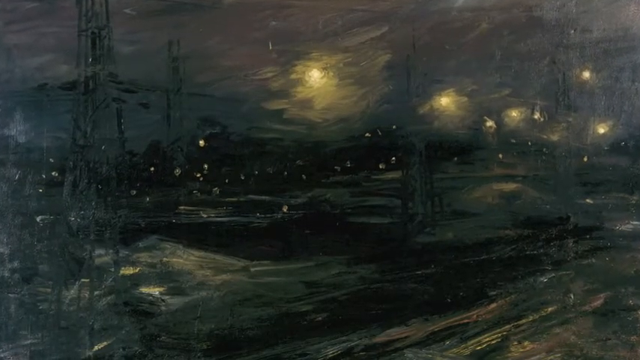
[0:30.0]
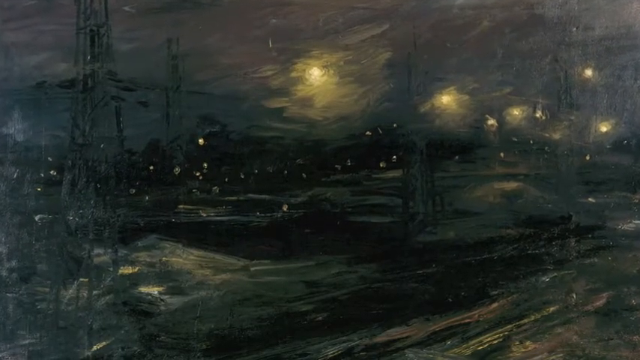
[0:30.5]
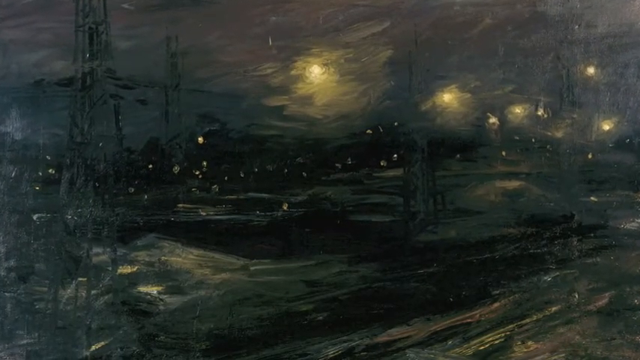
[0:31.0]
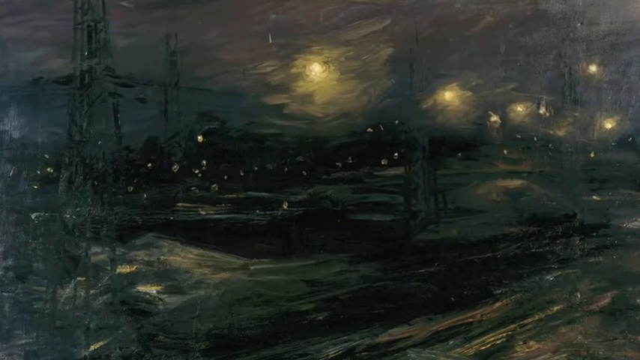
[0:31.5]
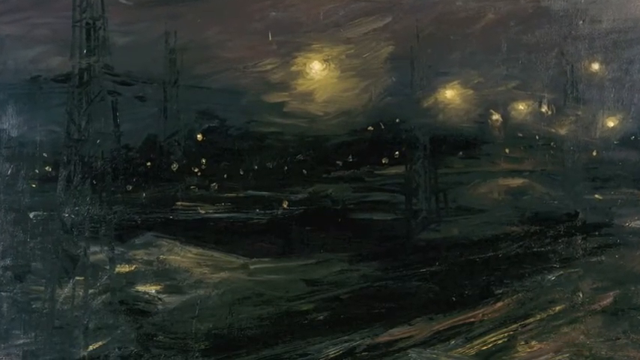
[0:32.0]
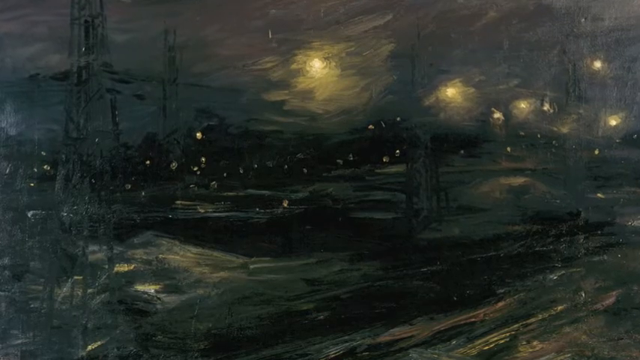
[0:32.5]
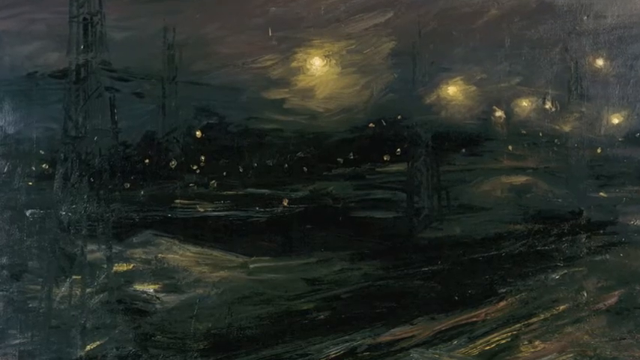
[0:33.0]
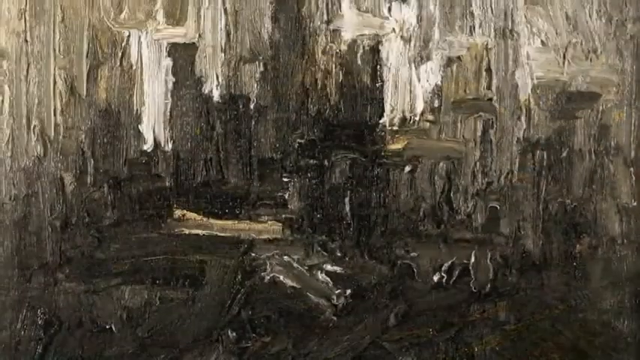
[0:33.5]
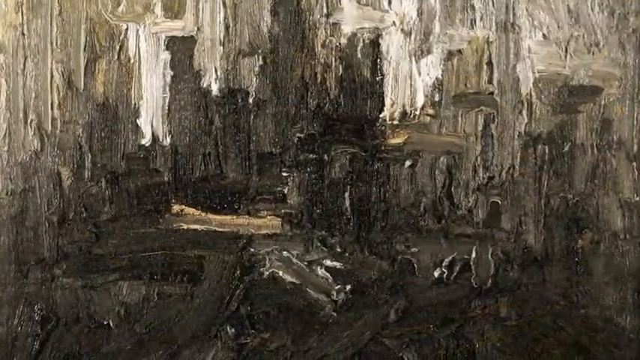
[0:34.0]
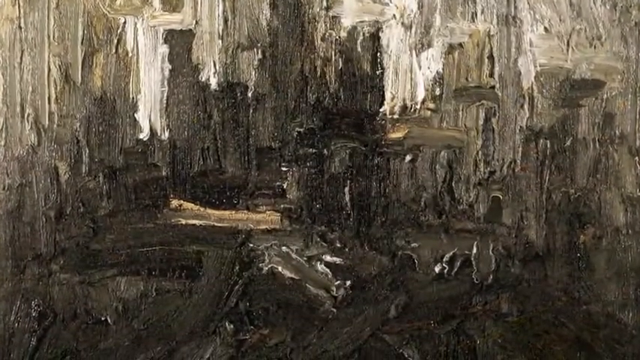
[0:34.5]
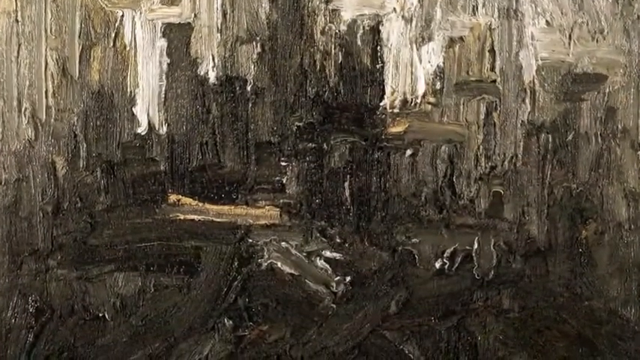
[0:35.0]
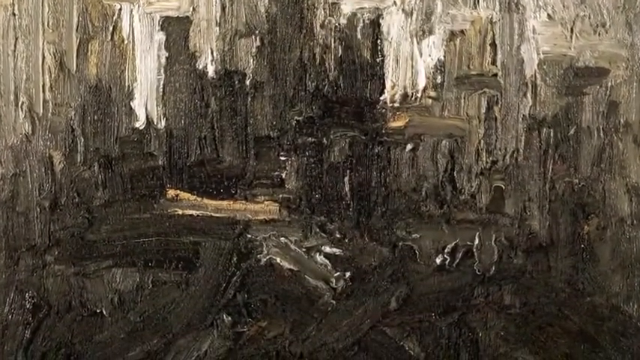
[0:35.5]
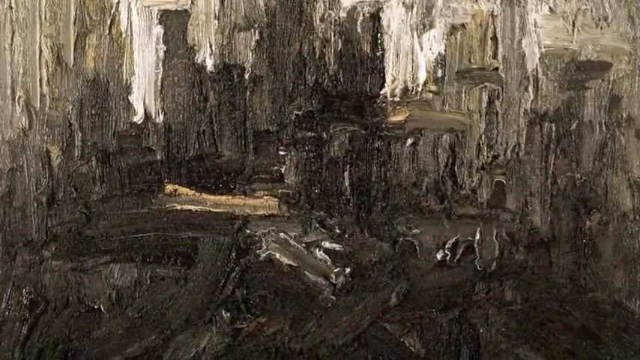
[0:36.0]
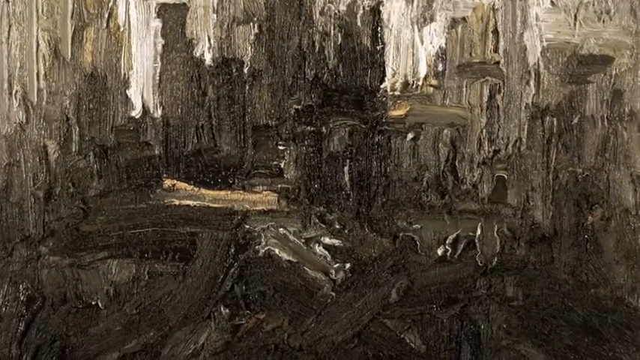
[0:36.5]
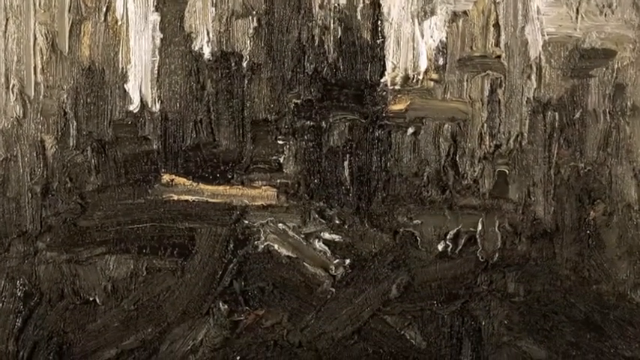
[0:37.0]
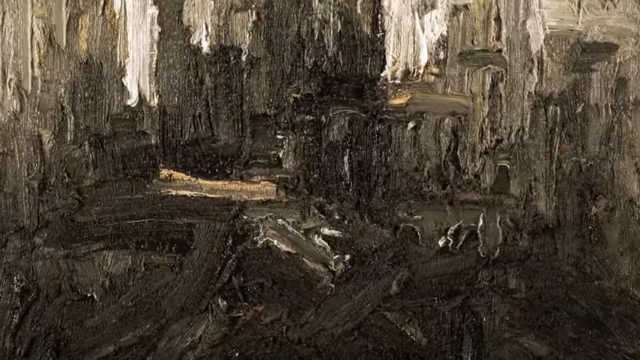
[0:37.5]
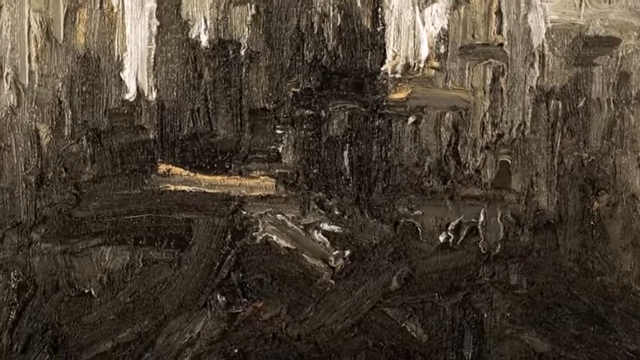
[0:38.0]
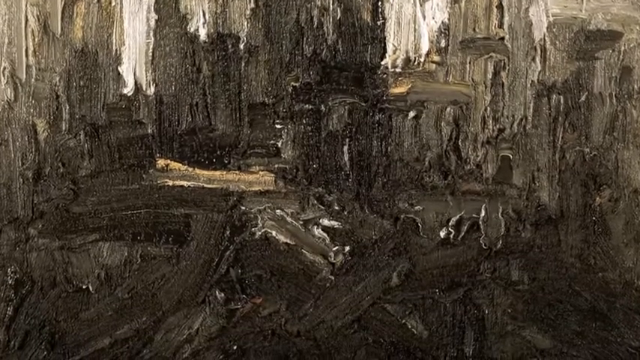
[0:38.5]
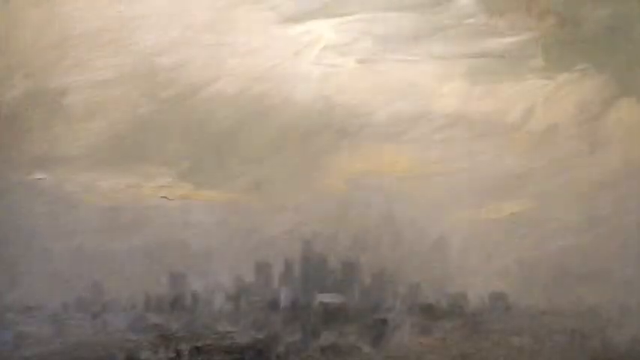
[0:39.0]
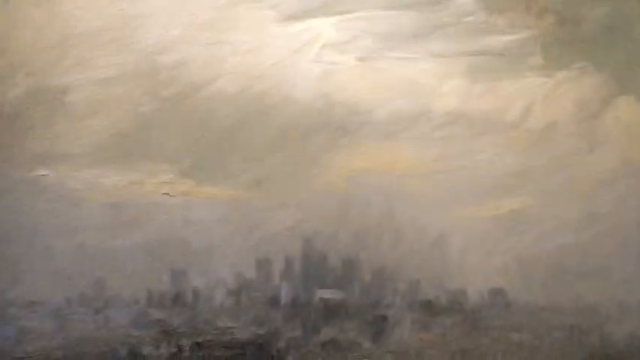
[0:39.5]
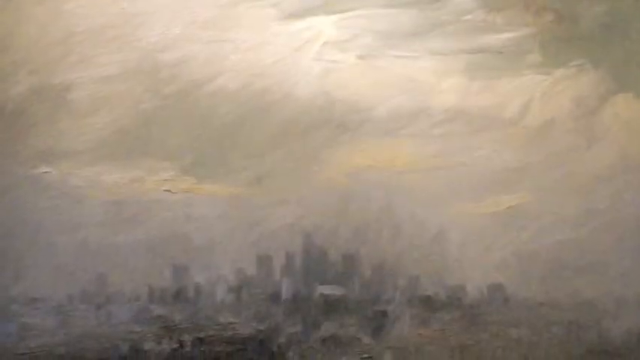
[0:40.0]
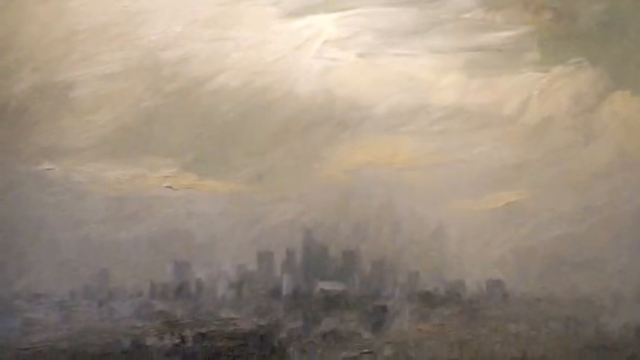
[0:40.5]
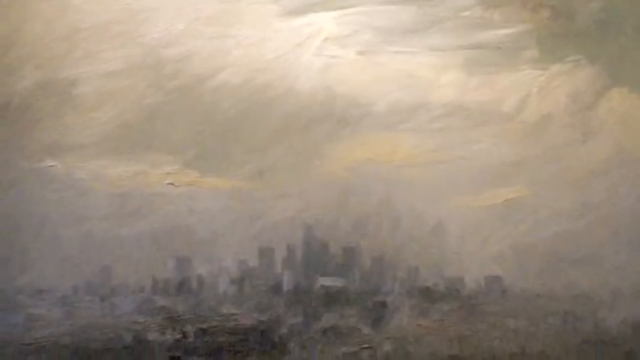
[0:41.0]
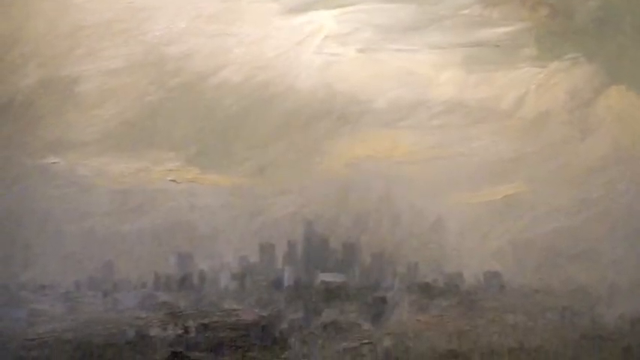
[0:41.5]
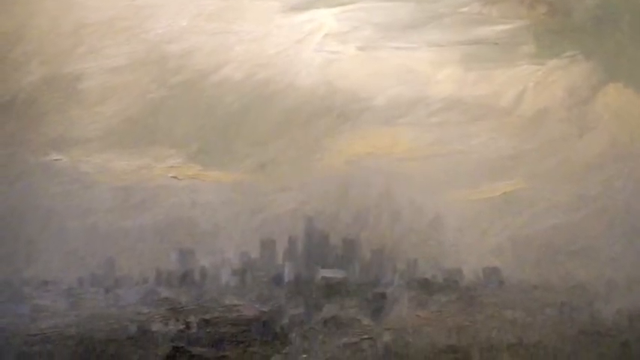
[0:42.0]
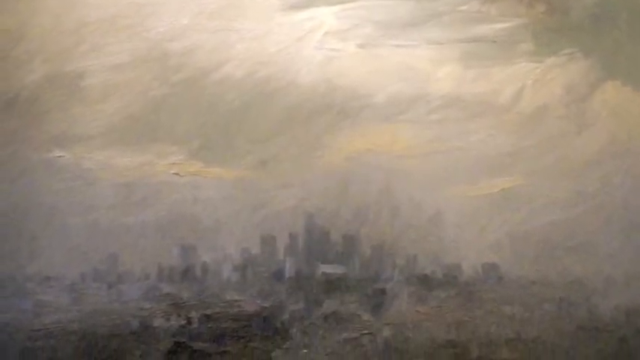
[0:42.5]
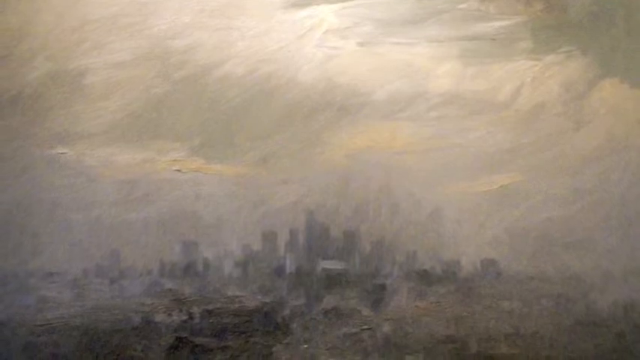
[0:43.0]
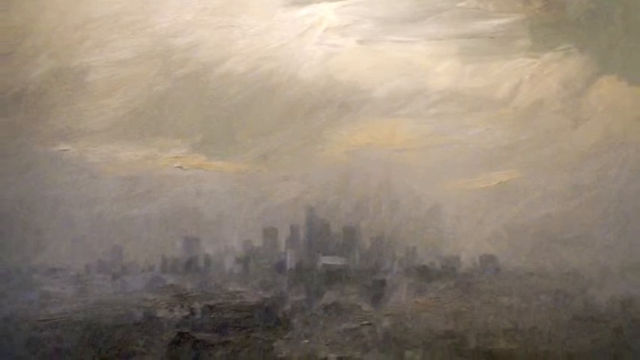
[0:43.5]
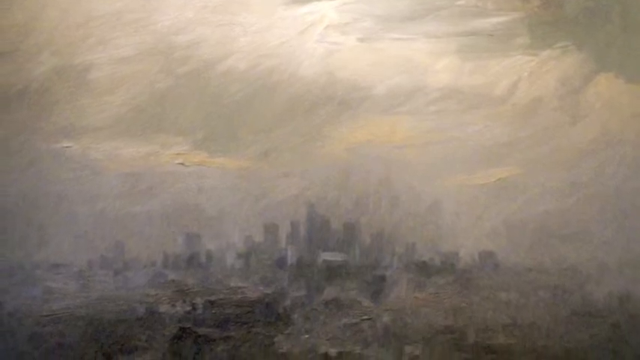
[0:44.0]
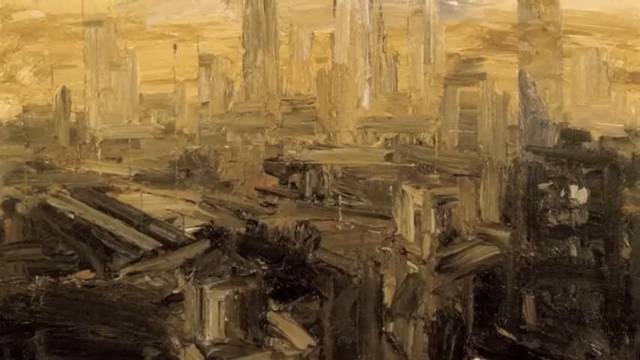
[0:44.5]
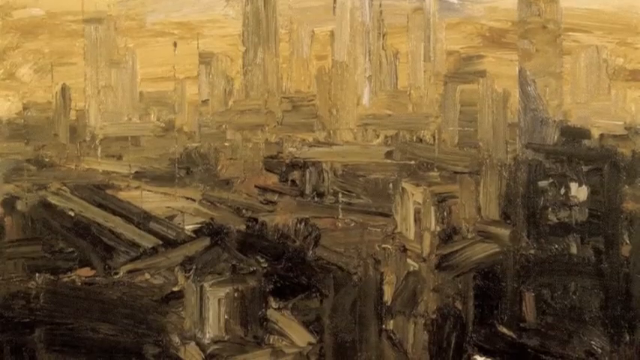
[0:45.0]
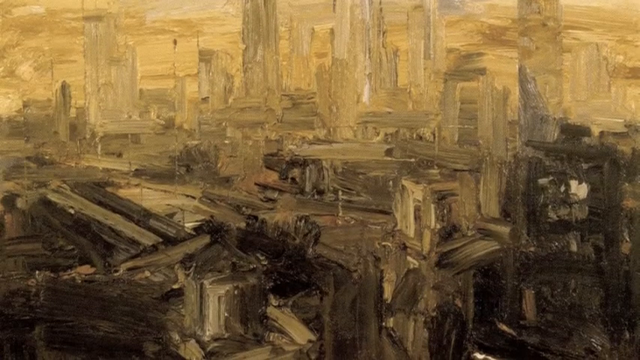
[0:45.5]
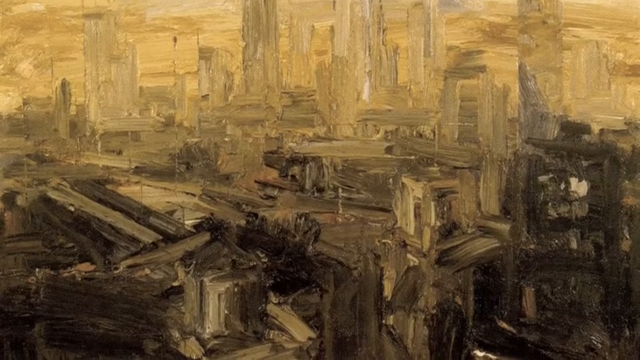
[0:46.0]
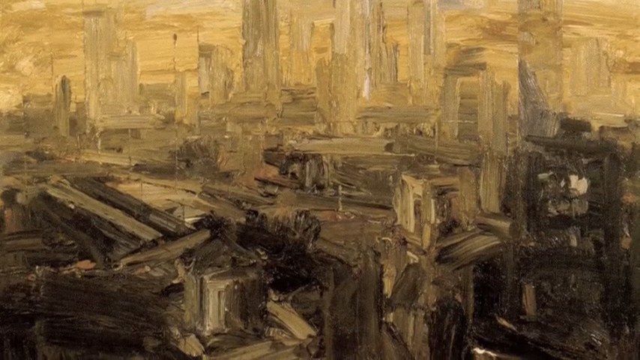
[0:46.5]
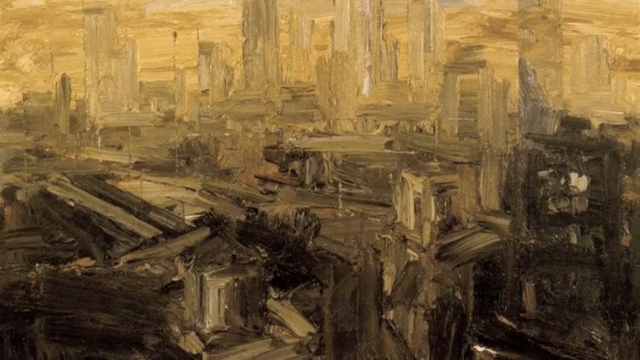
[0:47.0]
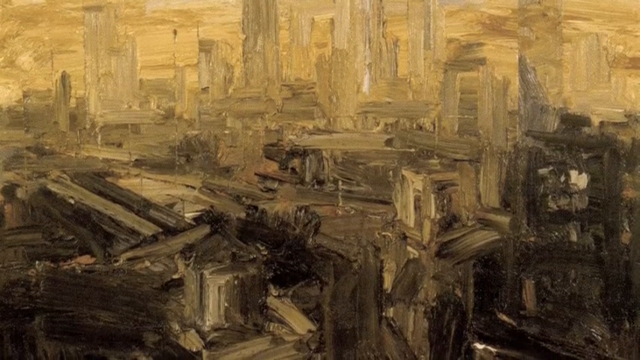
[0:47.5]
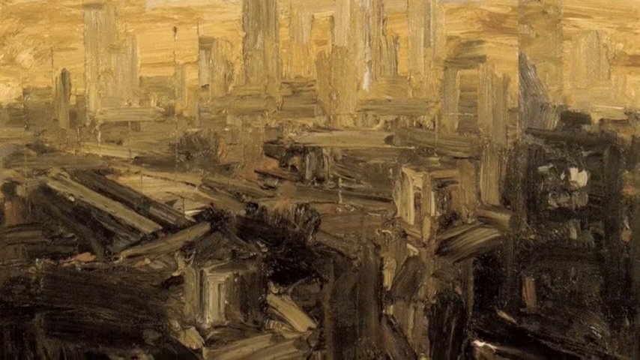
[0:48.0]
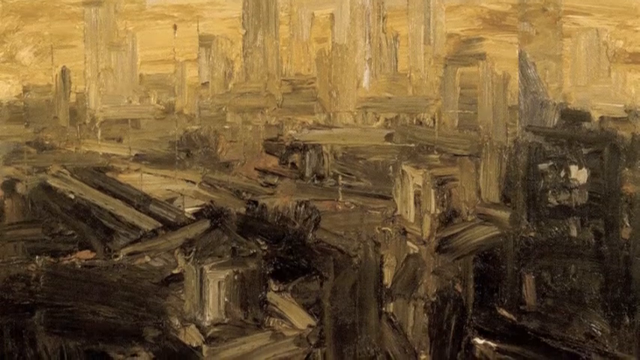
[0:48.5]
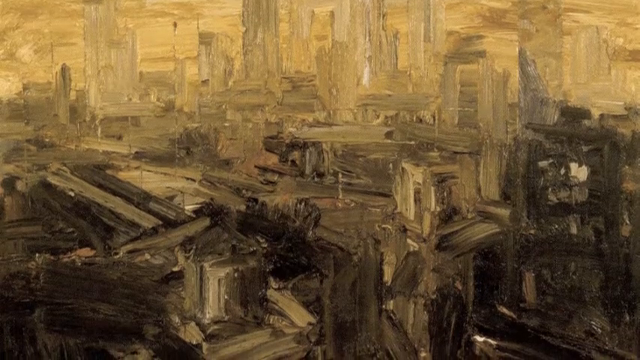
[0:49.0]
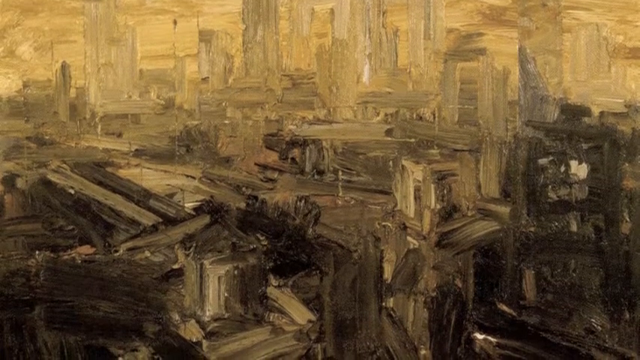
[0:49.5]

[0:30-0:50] More images of what appear to be paintings are shown. None of them has any color; they are dark and look strange.